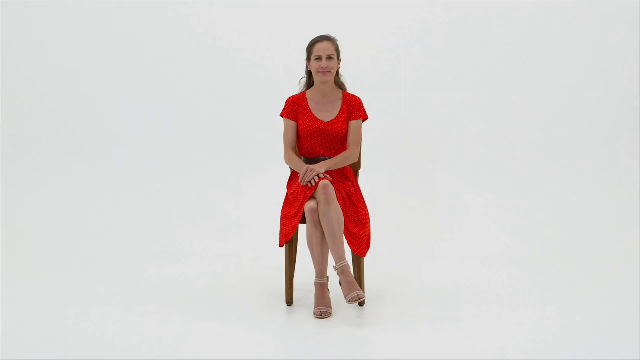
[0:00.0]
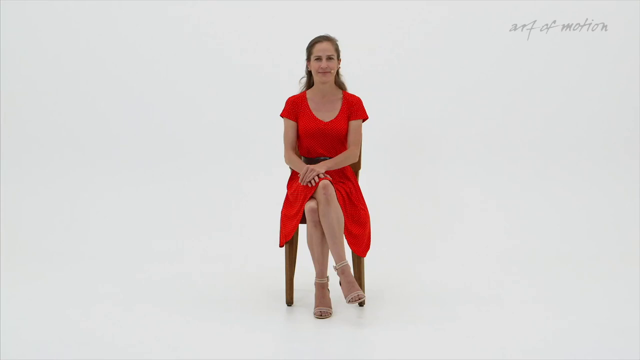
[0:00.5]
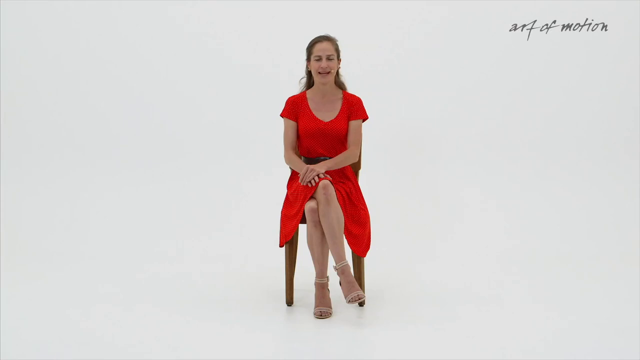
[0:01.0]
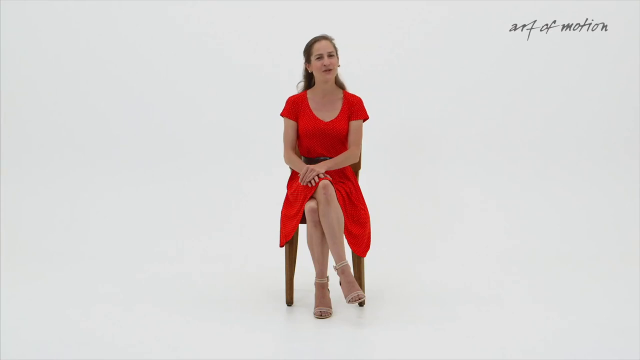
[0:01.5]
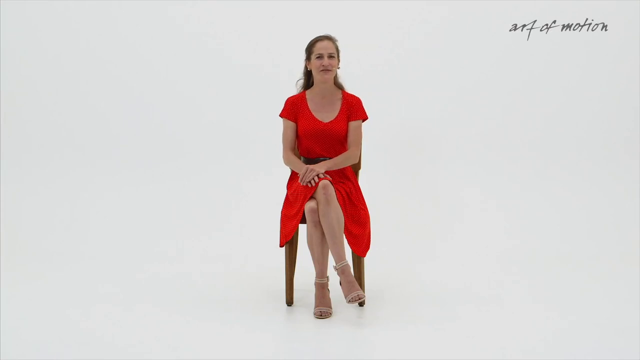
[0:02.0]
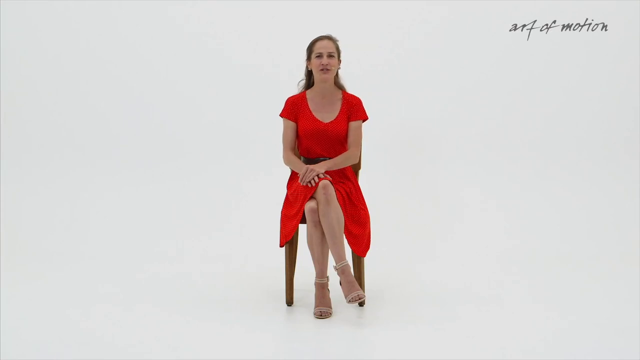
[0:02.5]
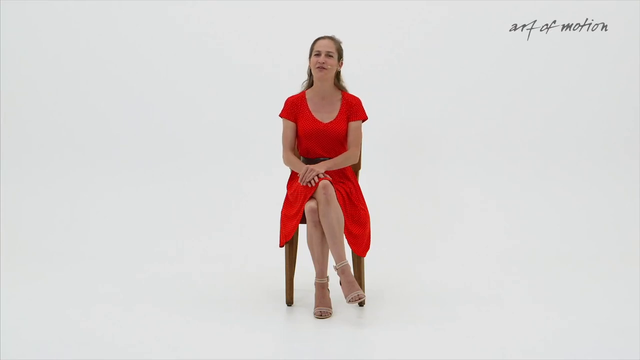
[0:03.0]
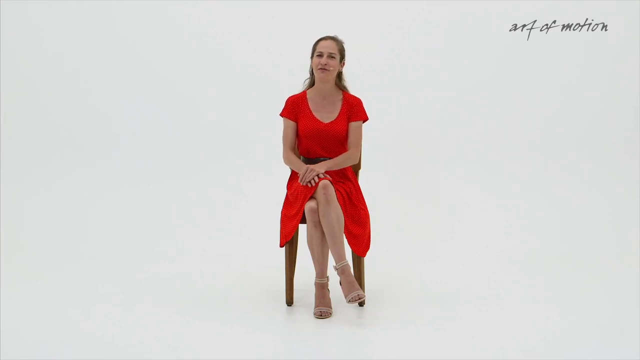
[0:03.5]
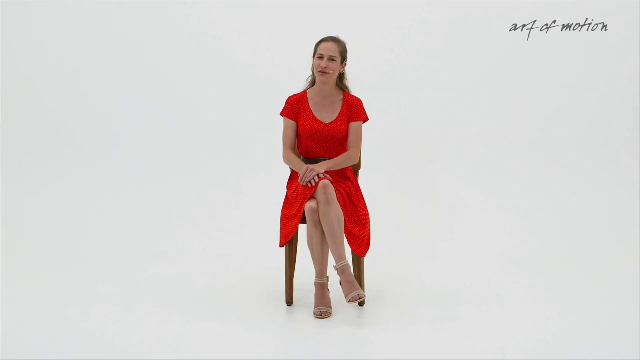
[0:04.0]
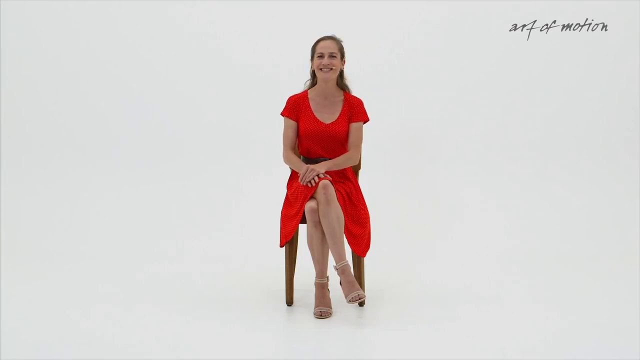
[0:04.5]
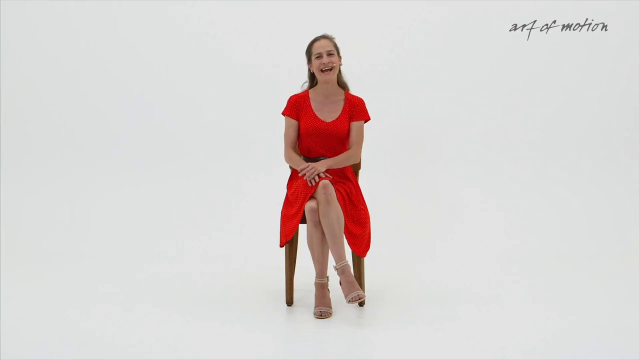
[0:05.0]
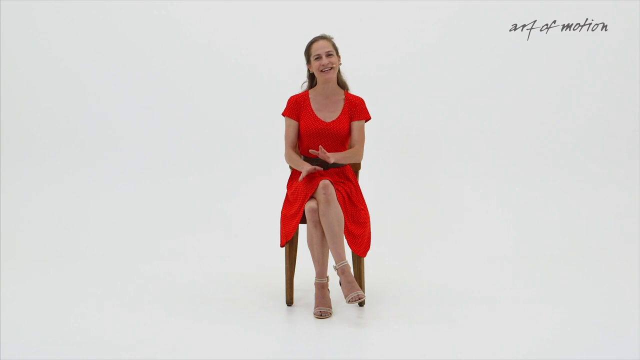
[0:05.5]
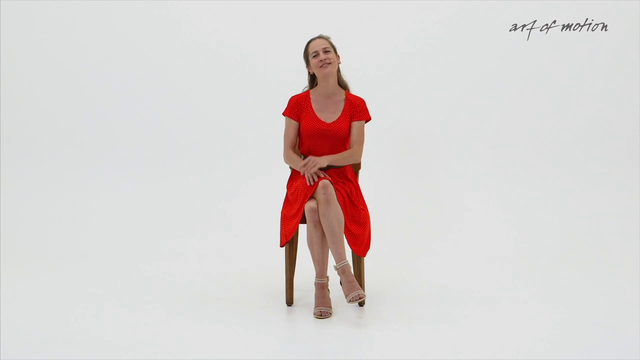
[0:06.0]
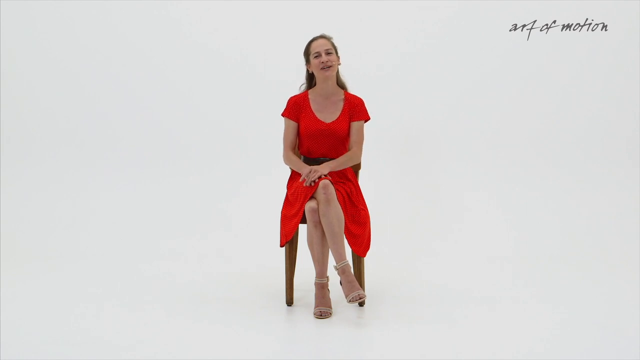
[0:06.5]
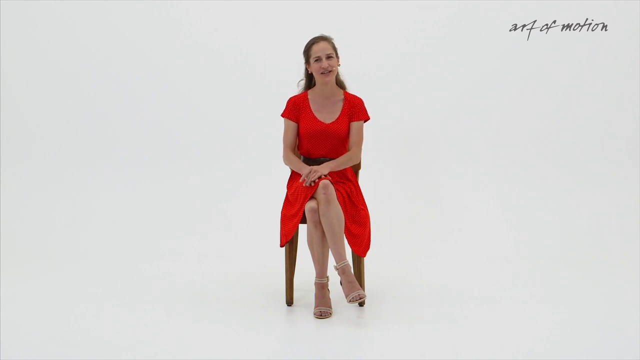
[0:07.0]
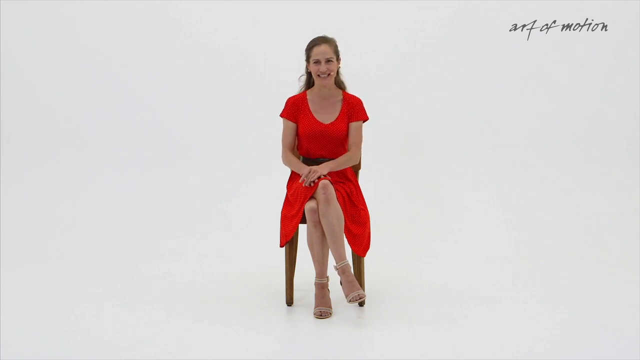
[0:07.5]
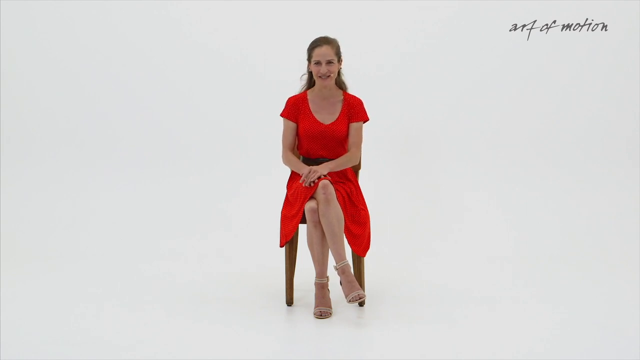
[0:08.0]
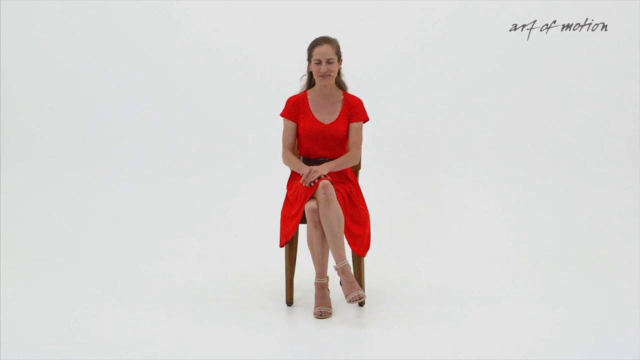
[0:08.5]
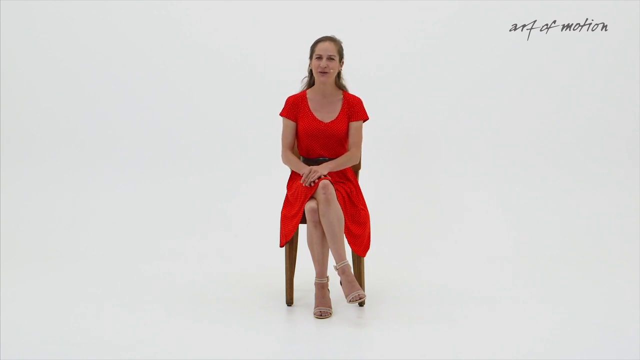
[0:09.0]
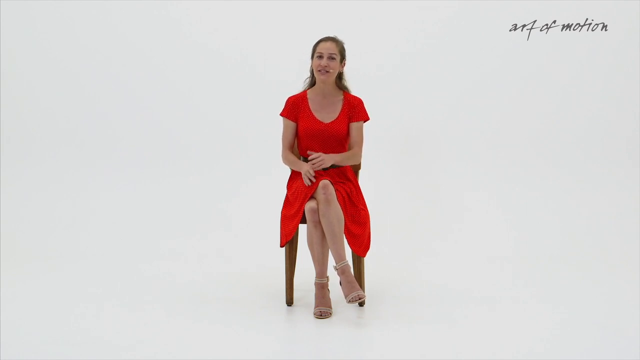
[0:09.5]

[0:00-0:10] A white woman who looks to be in her mid to late 30s sits in a bright, open-neck, boat-neck type red dress with short sleeves. She appears to be wearing a kind of black accessory belt along her waist that kind of accentuates and separates her waist from her torso. Her beige high-heeled shoes have a band above the ankle and another band across the toes. She sits on a brown hardwood chair that looks like it might be oak or maybe cherry. Her legs are crossed, and her hands rest on each other on her lap above the higher knee. Behind her is an infinite white photography background that seems to go on to infinity. She starts speaking, nodding her head and turning it slightly to match her inflections. She also gestures, lifting her hands just a little off her lap so her palms are visible for a moment before returning them to her lap, one on top of the other.